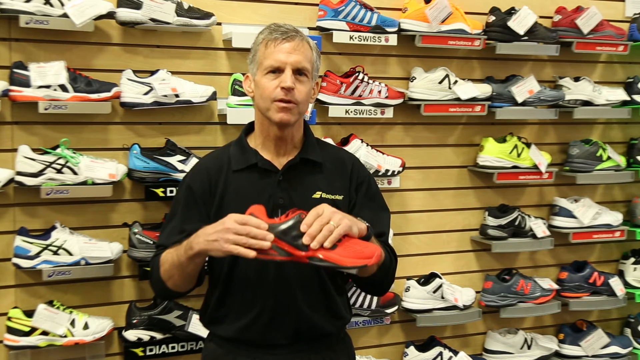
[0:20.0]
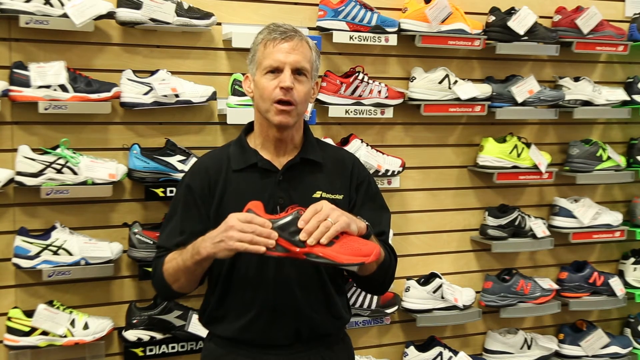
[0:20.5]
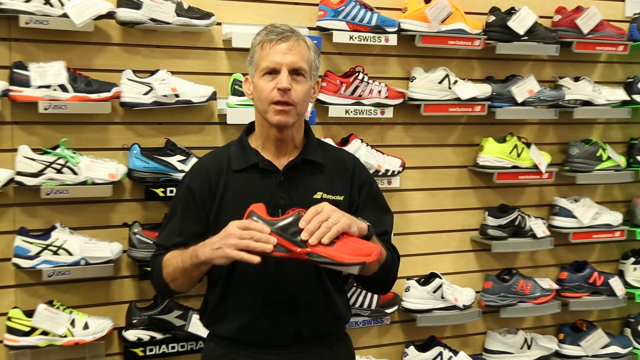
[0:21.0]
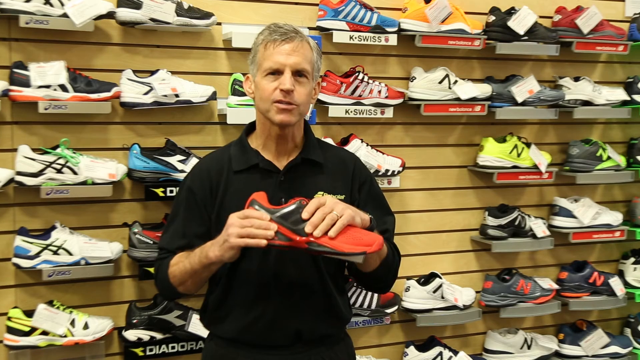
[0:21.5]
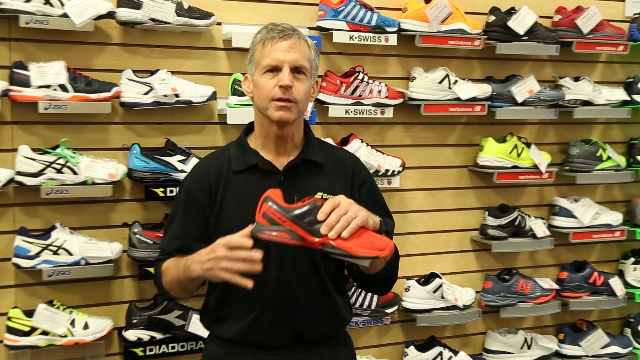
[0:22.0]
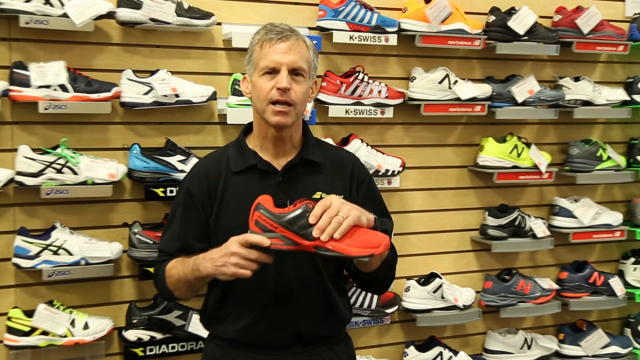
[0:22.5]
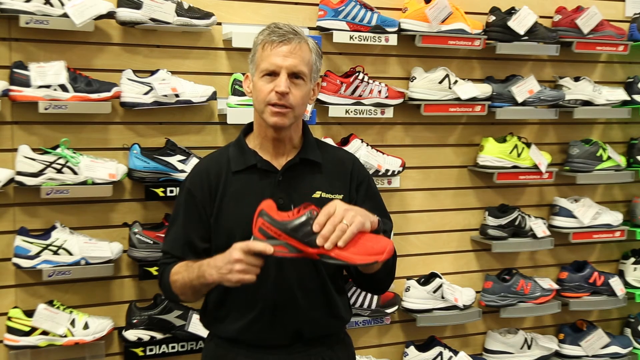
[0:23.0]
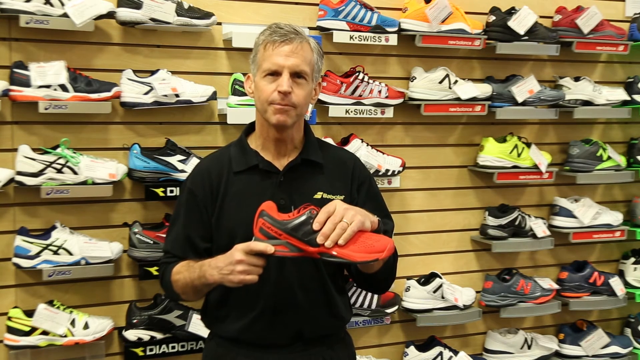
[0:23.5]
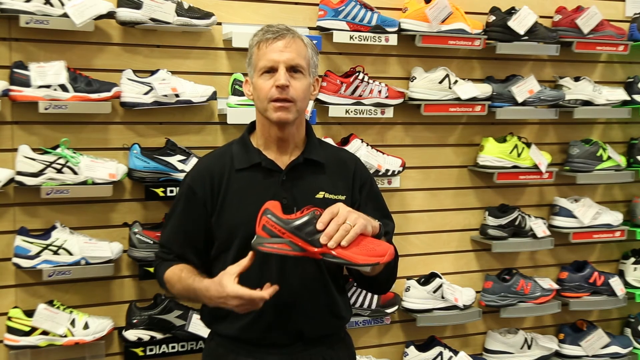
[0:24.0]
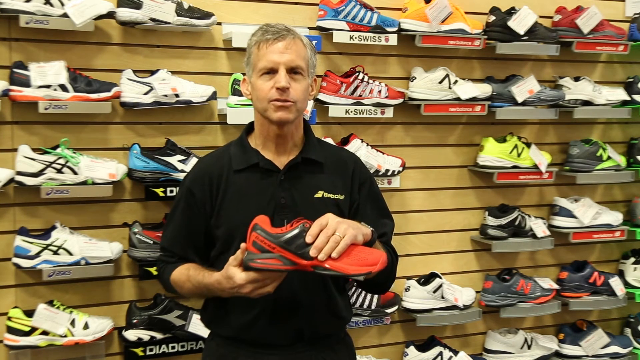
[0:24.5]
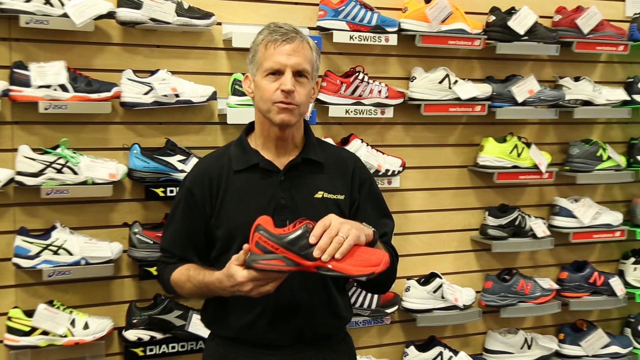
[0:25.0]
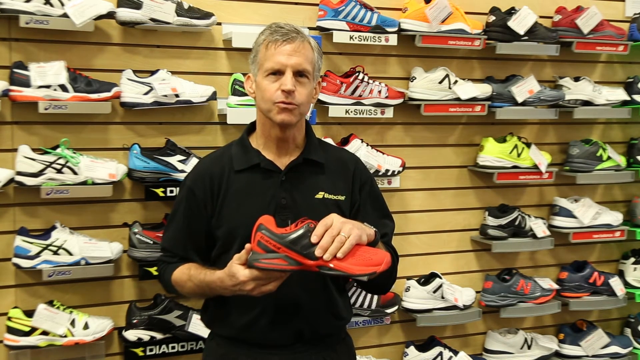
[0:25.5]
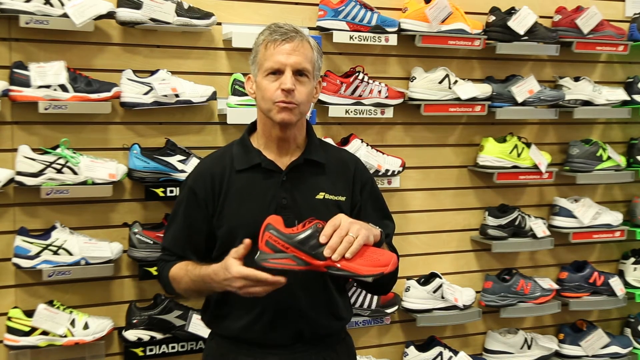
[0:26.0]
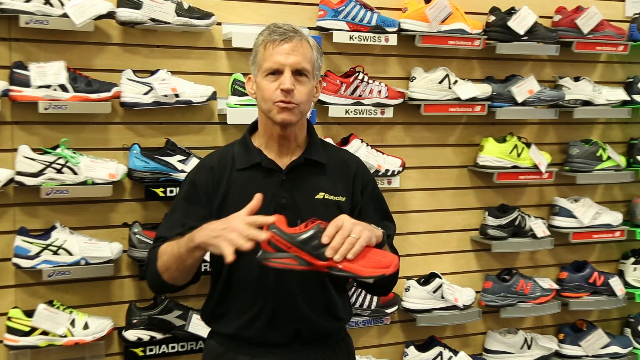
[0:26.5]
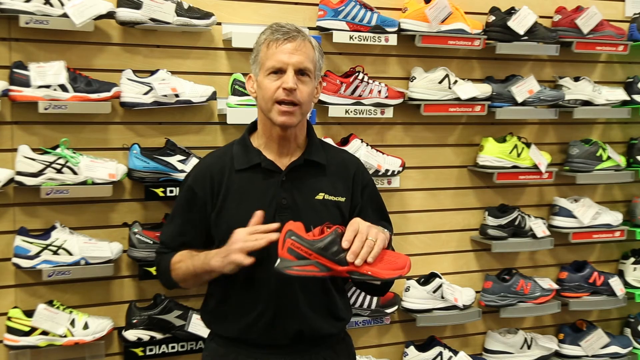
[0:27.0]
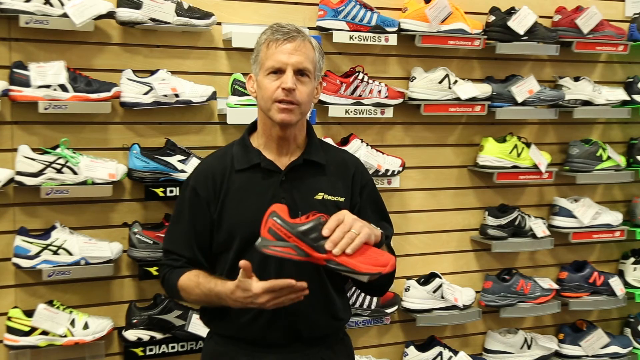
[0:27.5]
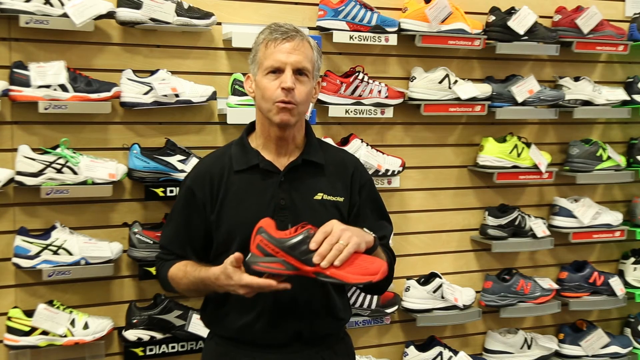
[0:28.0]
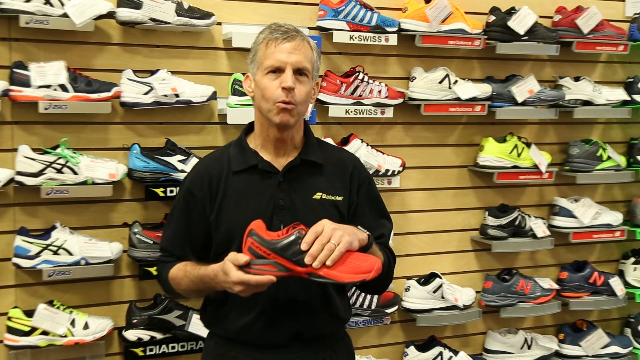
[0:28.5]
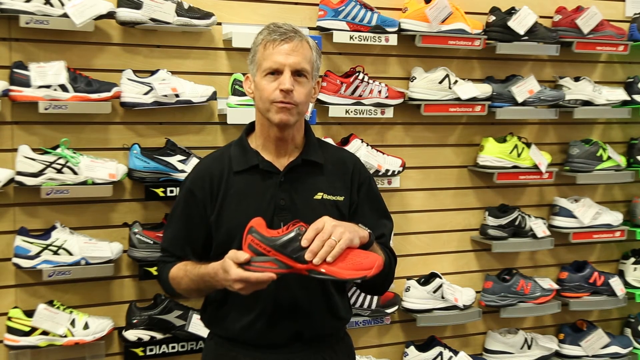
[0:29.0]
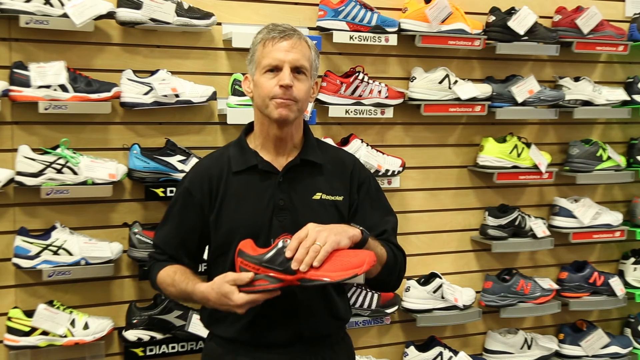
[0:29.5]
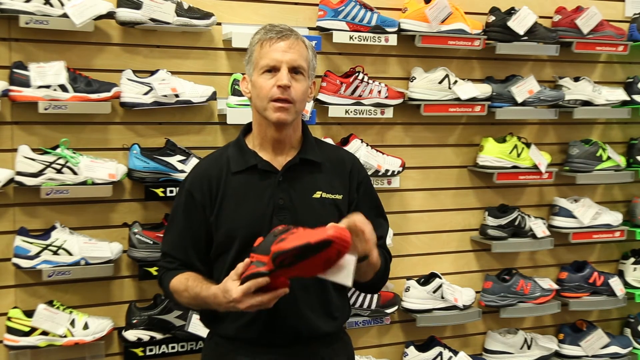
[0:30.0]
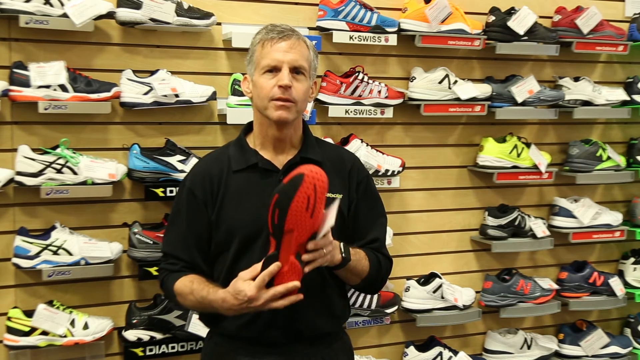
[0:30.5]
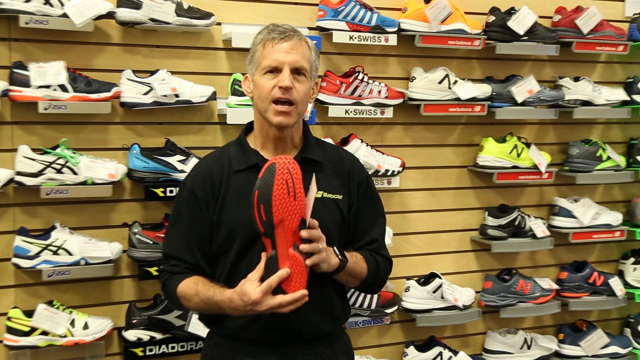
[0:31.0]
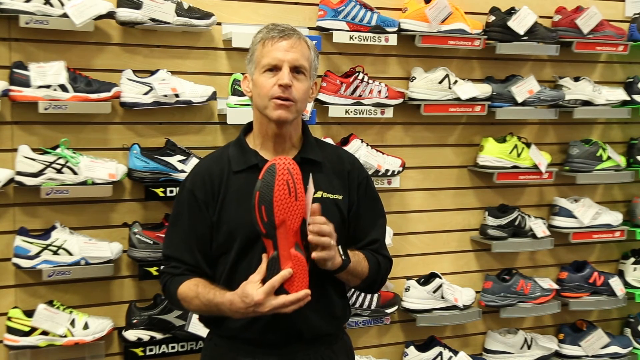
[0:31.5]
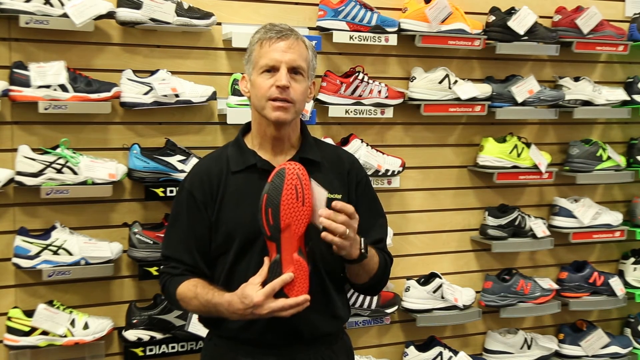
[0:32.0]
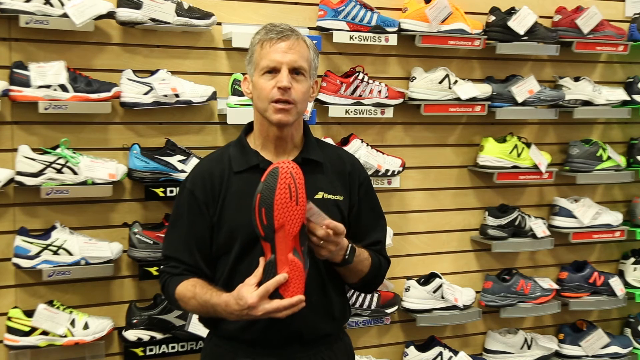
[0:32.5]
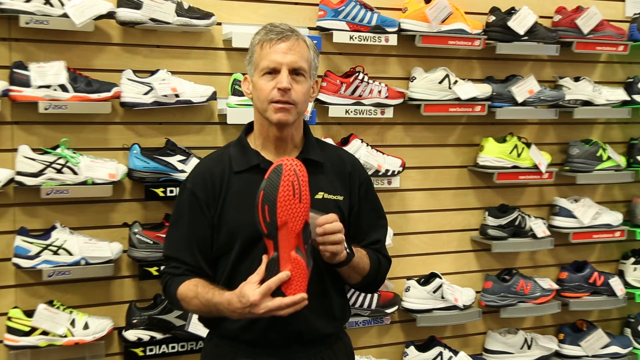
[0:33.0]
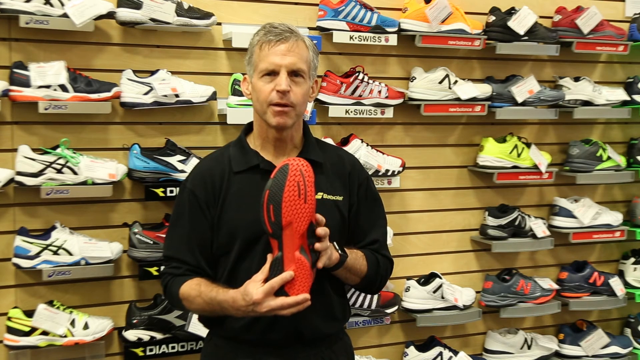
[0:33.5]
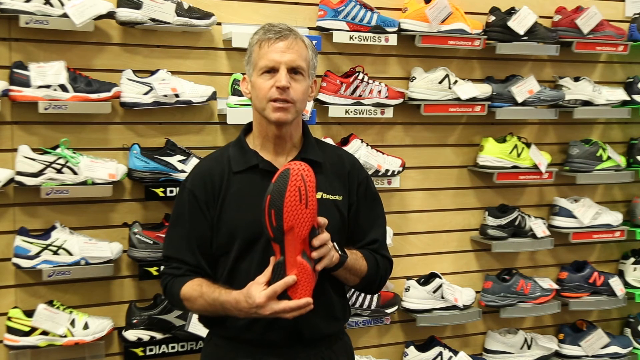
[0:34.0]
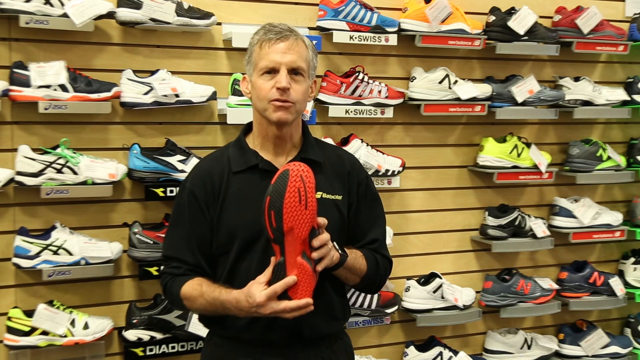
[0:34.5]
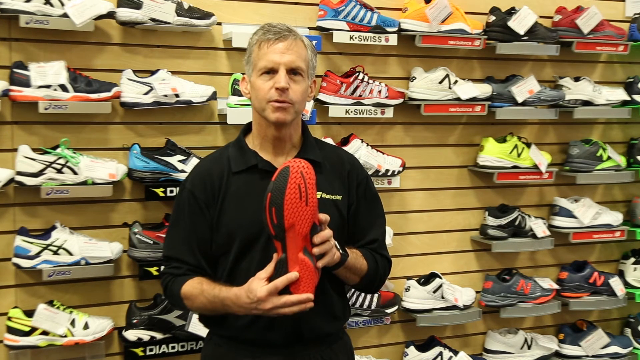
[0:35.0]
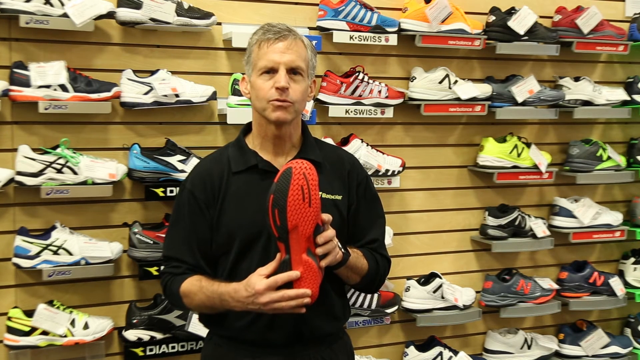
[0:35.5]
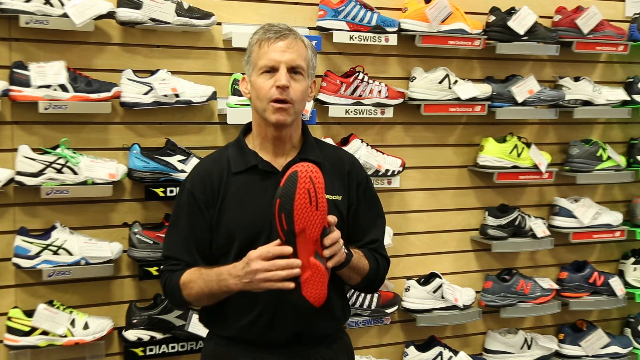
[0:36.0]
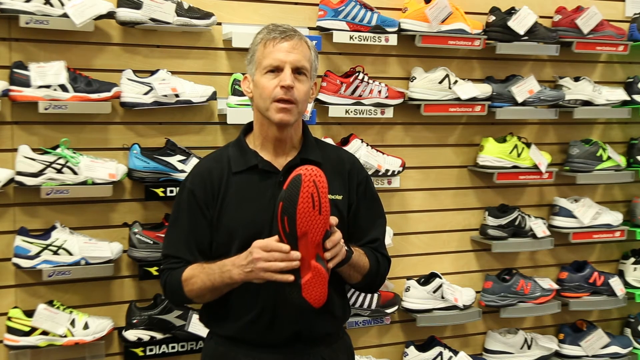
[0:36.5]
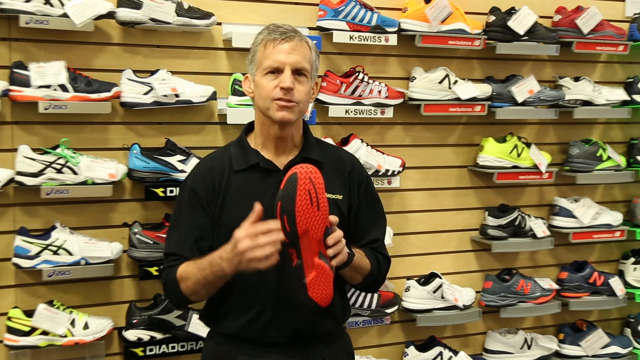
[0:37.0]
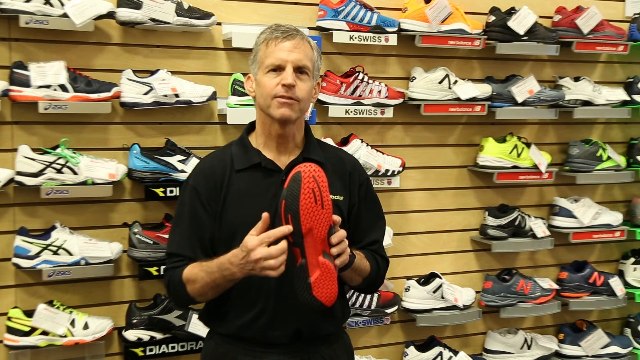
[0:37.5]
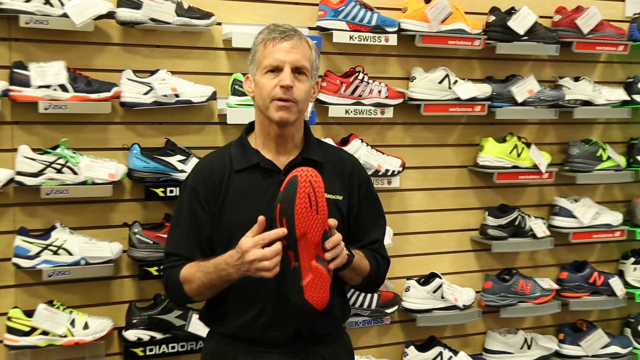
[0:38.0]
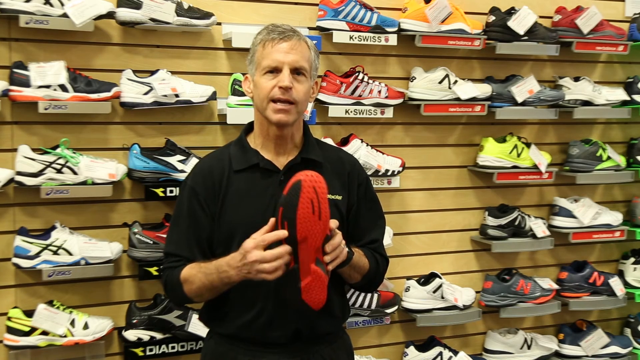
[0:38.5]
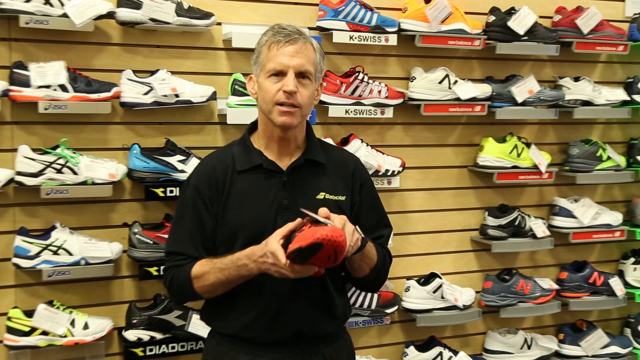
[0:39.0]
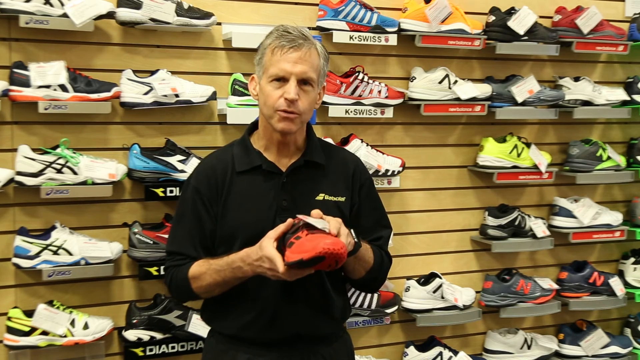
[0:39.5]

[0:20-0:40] A man appears to be standing in a shoe store. Behind him on the wall are five rows of athletic shoes on display. The back wall has horizontal wood panels stained in a light color. Each shoe is displayed from the side and rests on a small plastic shelf, and some of the shelves have signs under the shoes. Many of the names are not visible, but one that is reads K-Swiss. The man in front of the wall wears a black shirt and holds a red and black athletic shoe in his hands as he speaks to the camera. He gestures with the shoe and at one point turns it so the sole is visible; the sole is mostly red with a black strip on the side. He points to the black strip and then appears to hold the shoe flat and move it from side to side.